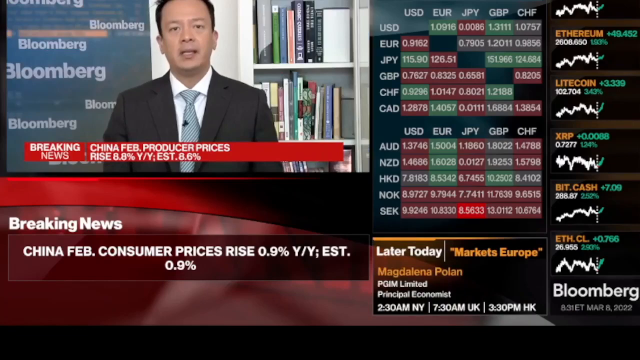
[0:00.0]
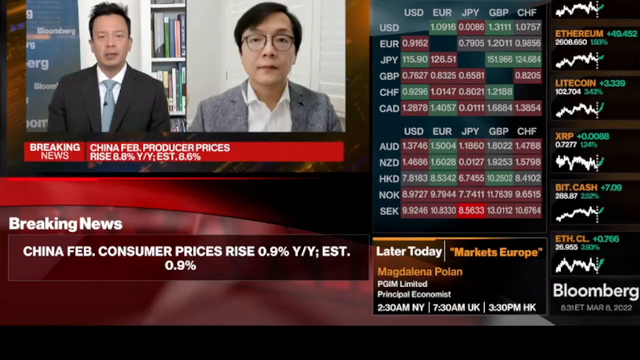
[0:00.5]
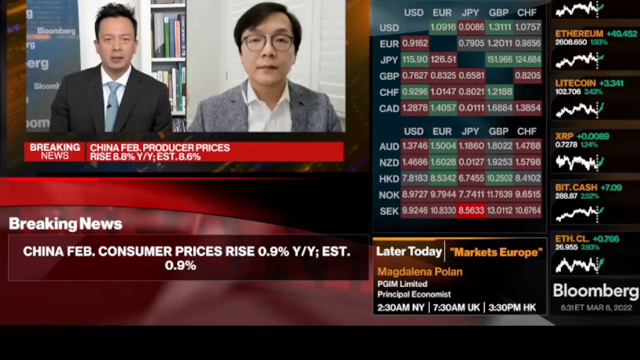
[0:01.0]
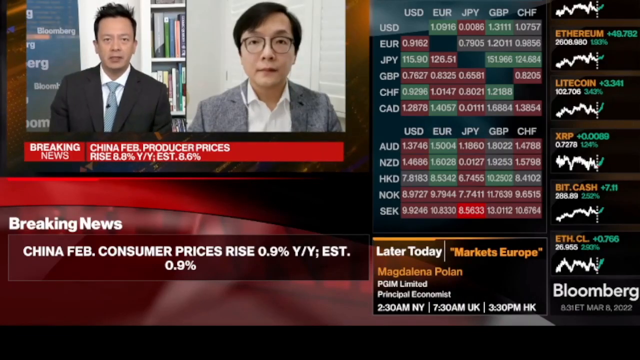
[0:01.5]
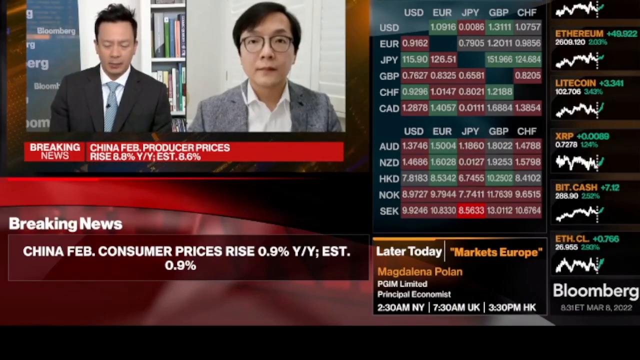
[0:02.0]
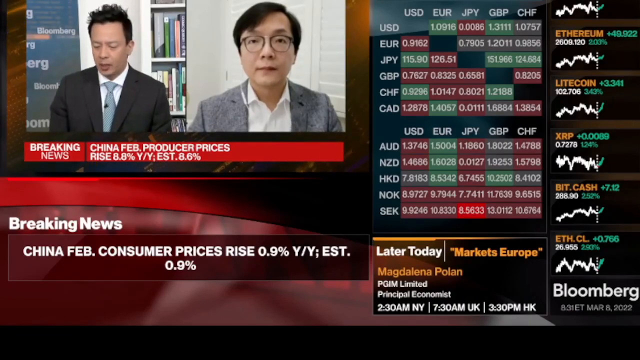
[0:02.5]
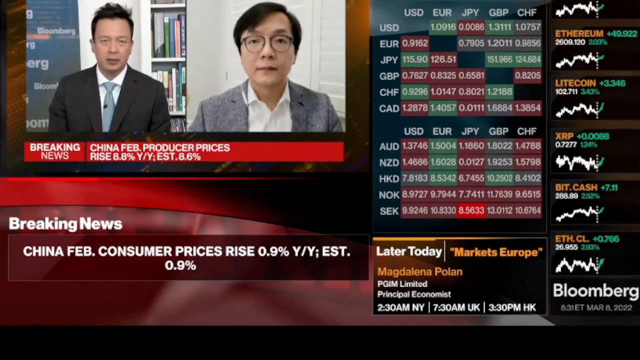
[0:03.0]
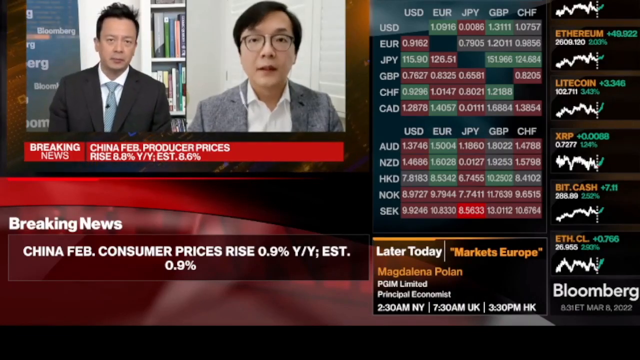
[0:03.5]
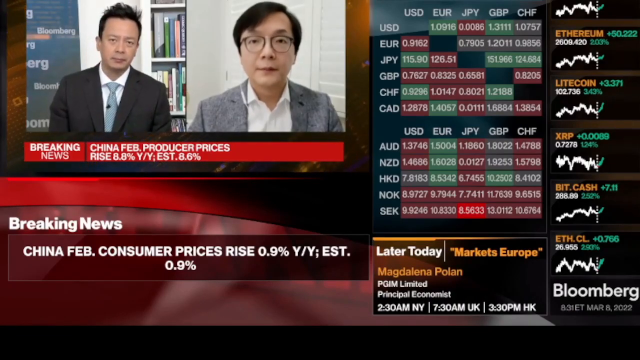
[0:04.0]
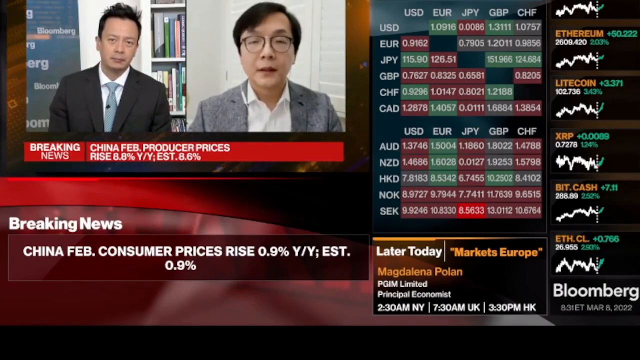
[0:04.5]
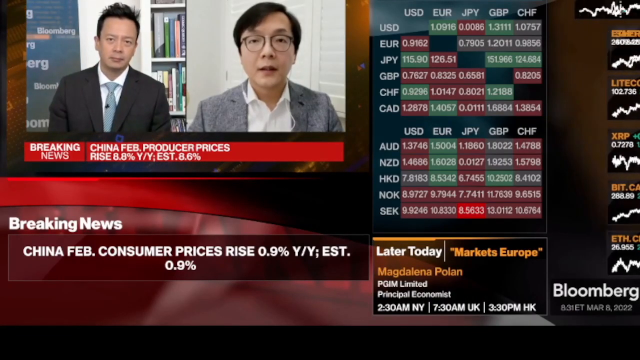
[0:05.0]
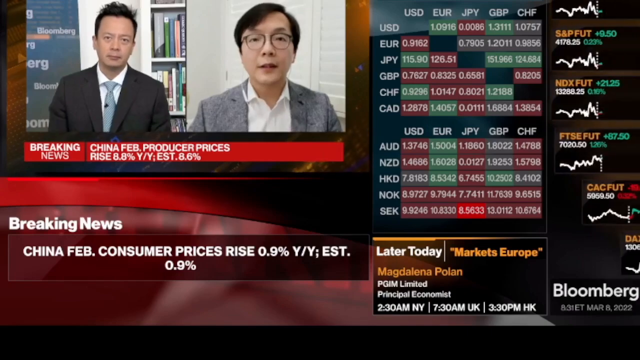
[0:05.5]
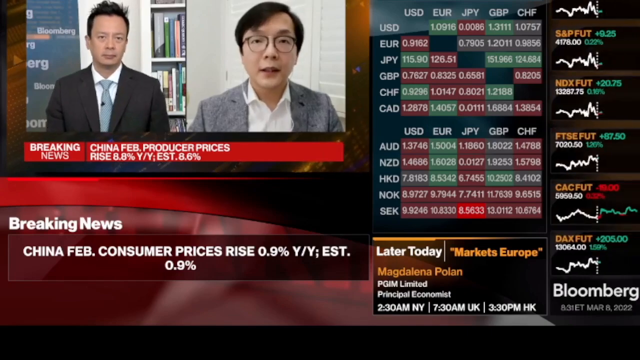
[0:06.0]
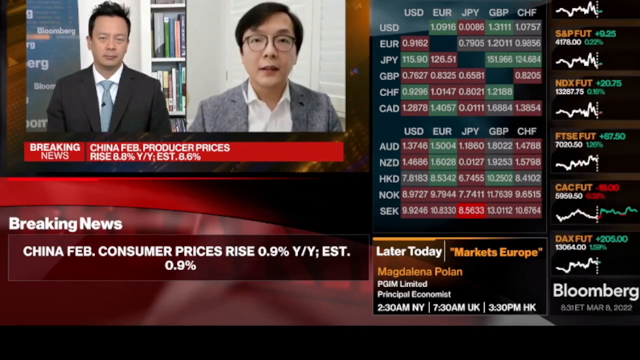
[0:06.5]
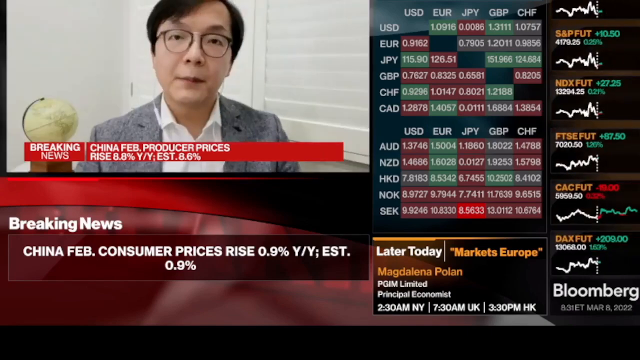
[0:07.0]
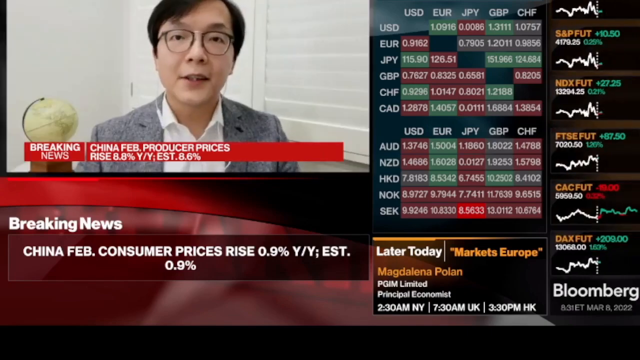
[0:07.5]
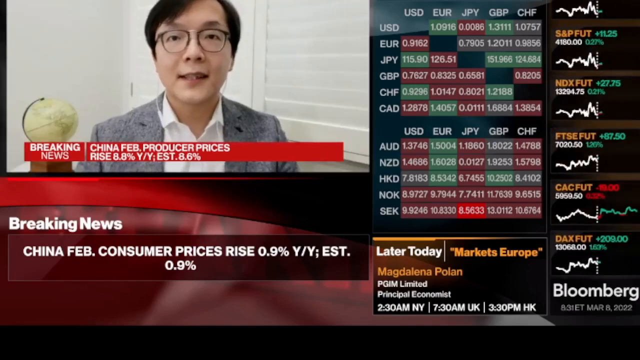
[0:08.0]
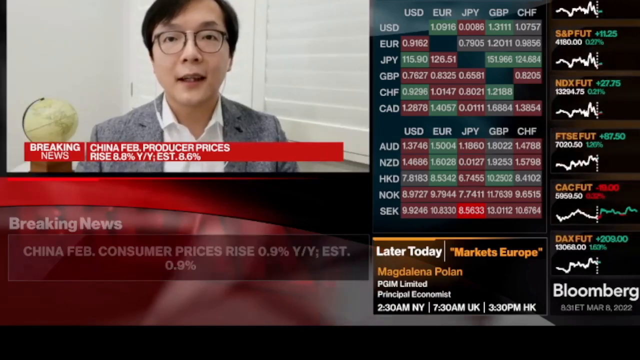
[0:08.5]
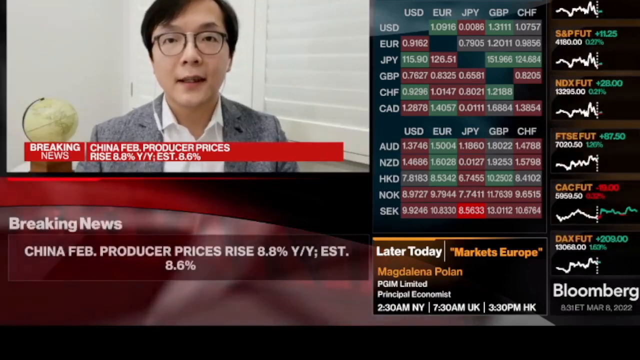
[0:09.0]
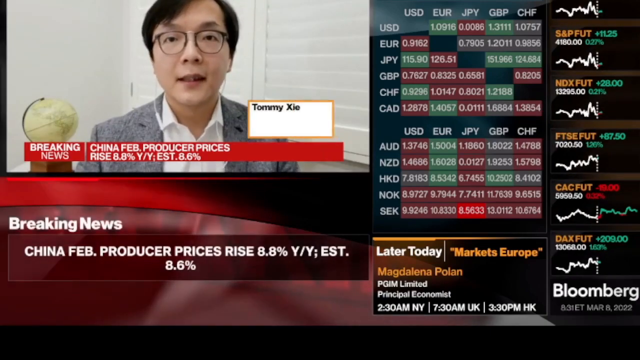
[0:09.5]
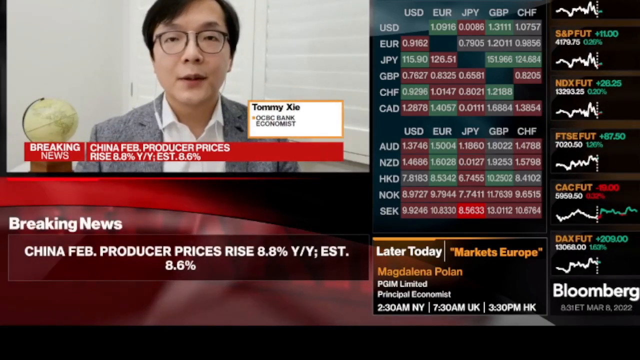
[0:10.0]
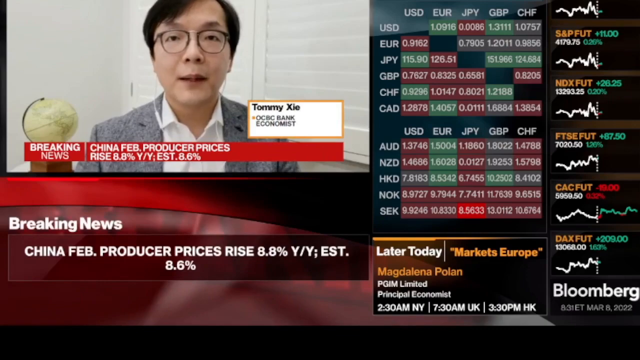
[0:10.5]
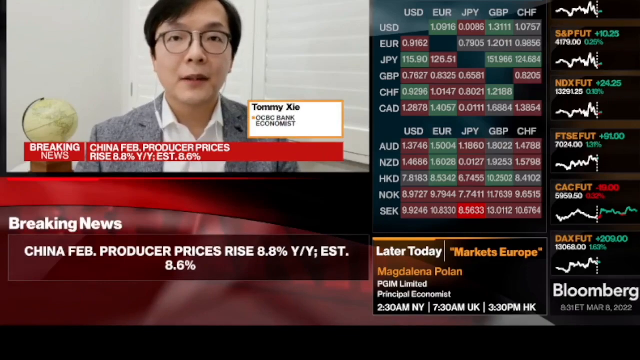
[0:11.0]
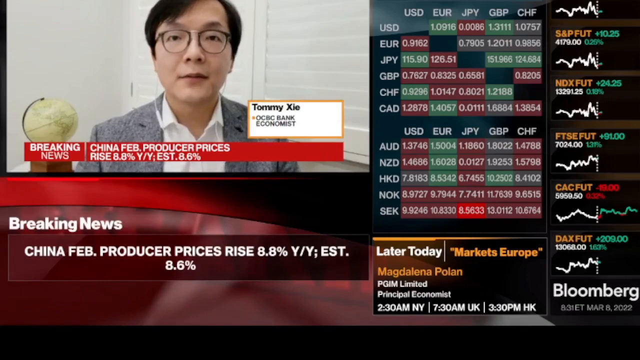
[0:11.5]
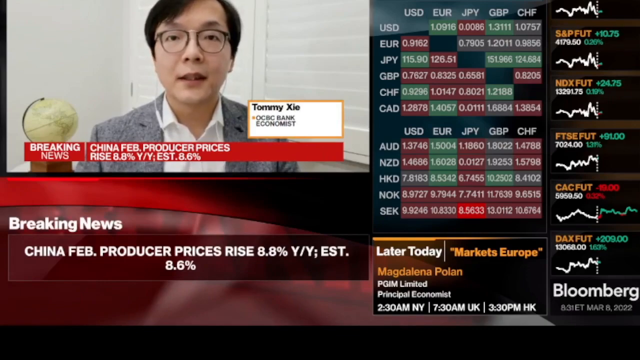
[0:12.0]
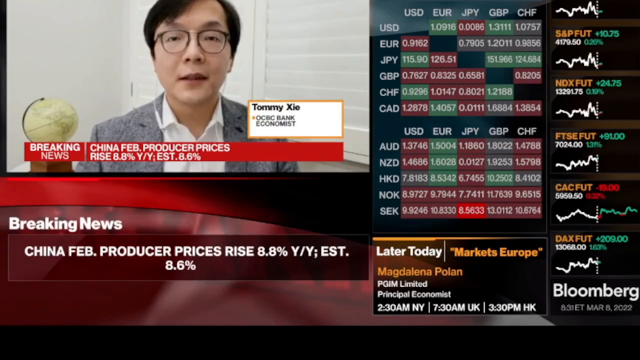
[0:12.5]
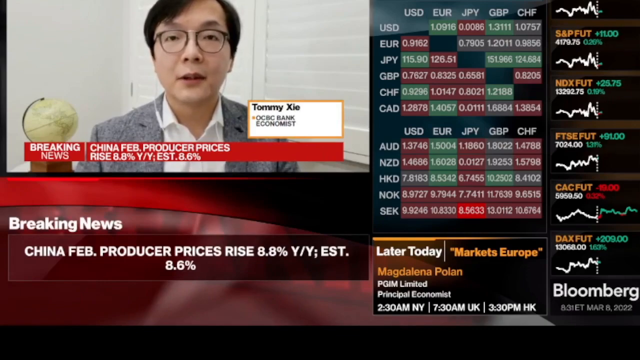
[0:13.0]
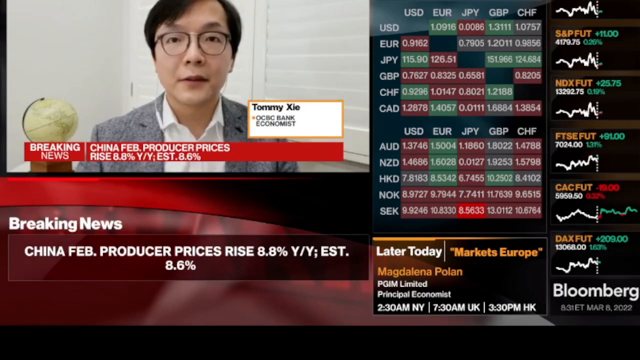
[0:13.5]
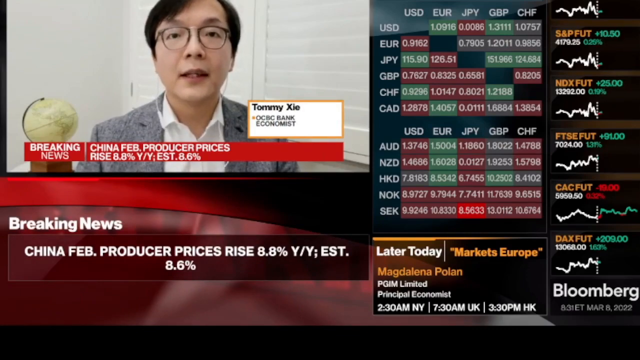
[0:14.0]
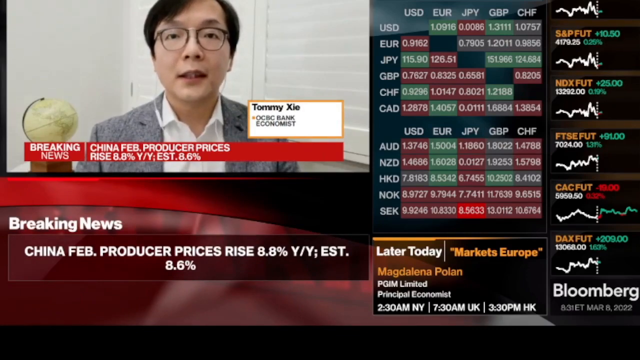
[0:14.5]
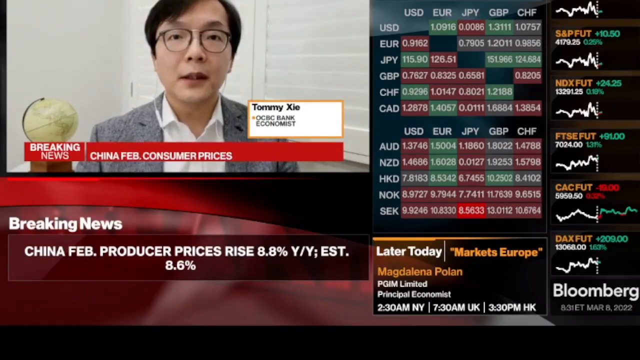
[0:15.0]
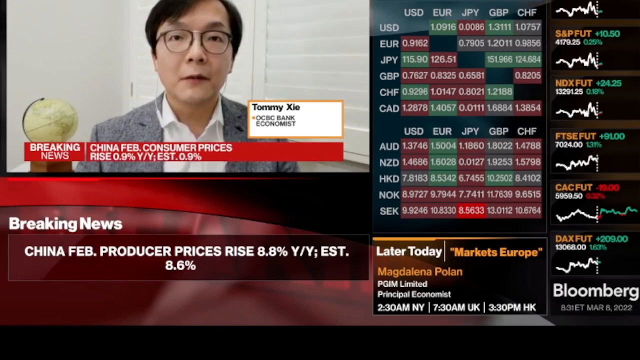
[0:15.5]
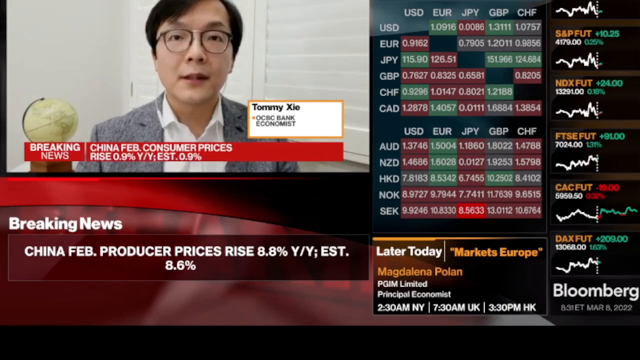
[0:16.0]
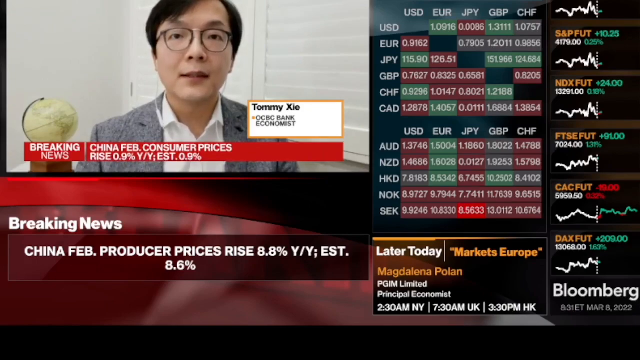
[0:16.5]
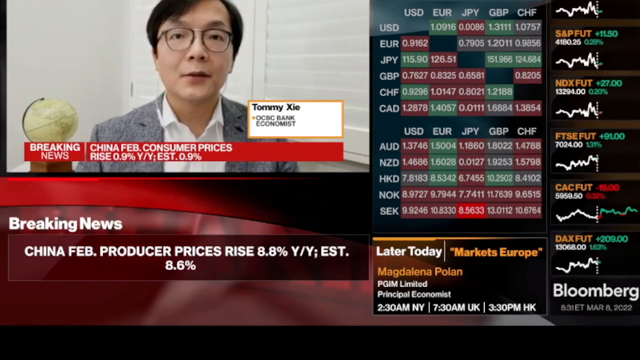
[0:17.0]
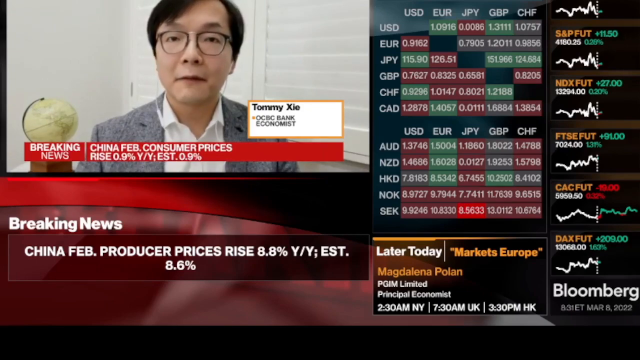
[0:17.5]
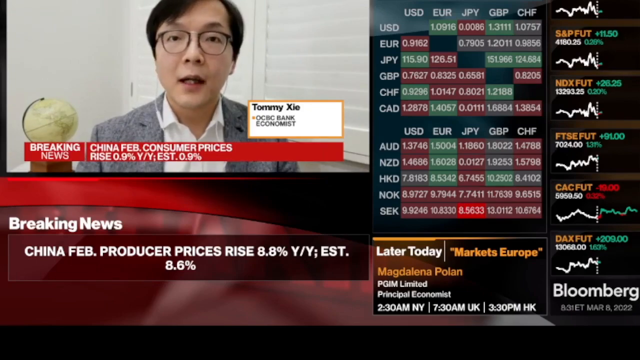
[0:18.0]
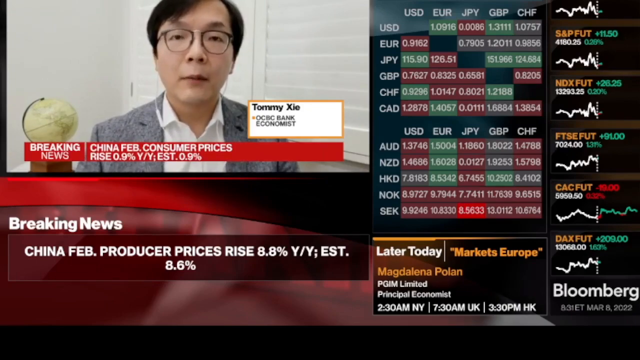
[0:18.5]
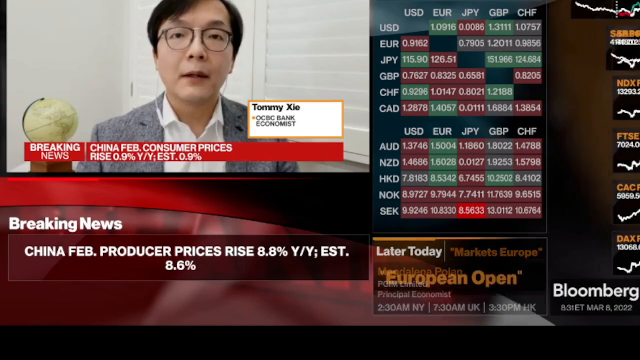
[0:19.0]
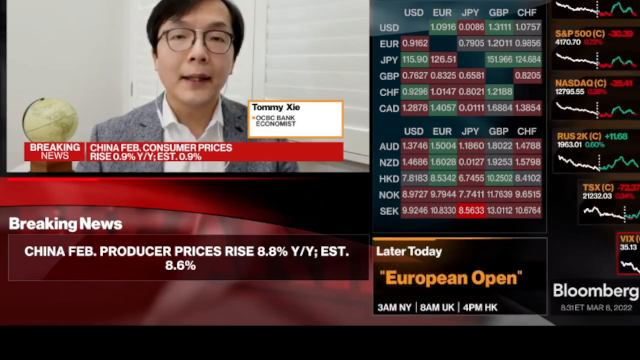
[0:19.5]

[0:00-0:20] A newscast begins with a split screen showing a reporter in each half. The caption underneath the video reads "breaking news, China FEB producer prices raise 8.8%." Captions are listed below the video, and on the right side, next to the video of the reporters talking, different stocks and money amounts are shown. The screen also shows that later today there will be a program called Markets Europe led by Magdalena Polan. The newscaster on the right is then shown full screen; the name shown is Tommy Xie, an OCBC Bank Economist. He seems to be talking about price rises and rising interest rates. A dark green logo appears in the bottom right of the video, along with the date, March 8, 2022, and the time, 8:31 Eastern Standard Time. The Markets Europe program is also listed with its start times in various time zones, and the text states that Magdalena Polan is a principal economist at PGI Unlimited.